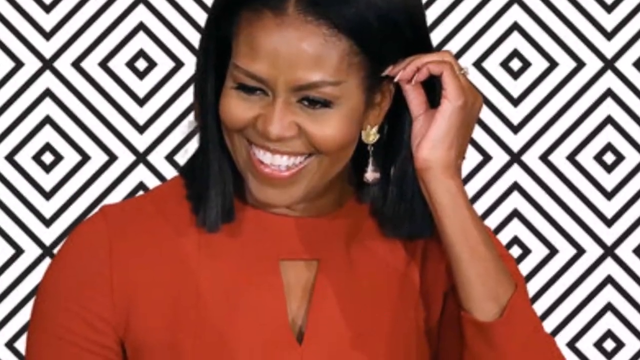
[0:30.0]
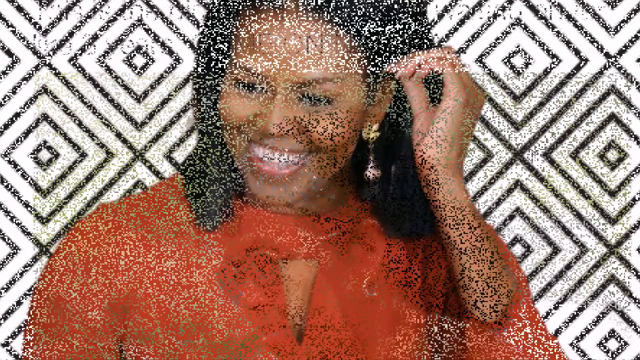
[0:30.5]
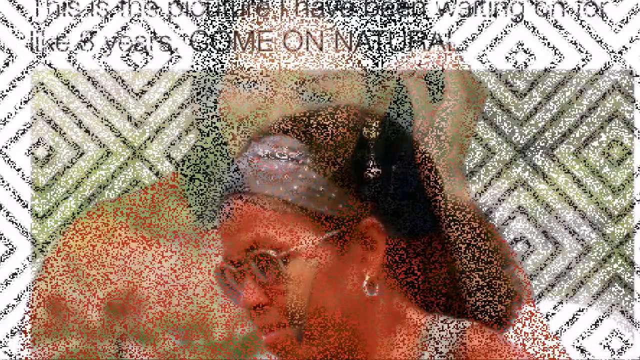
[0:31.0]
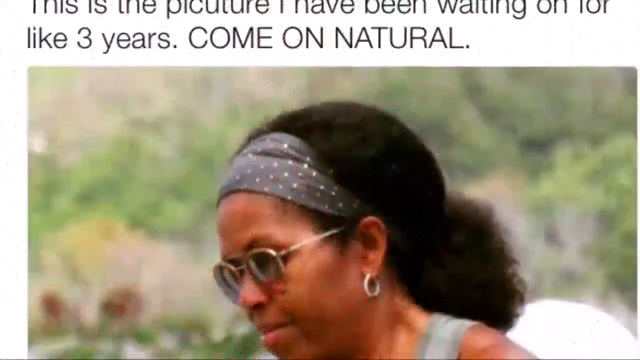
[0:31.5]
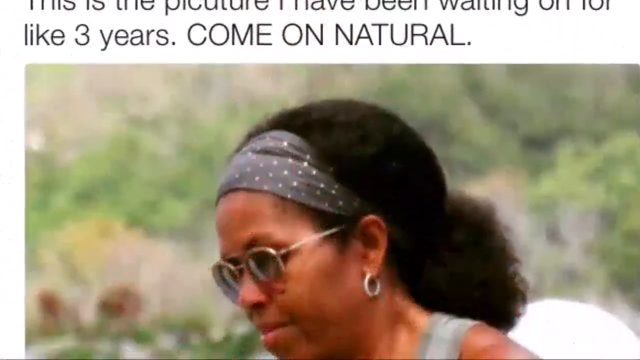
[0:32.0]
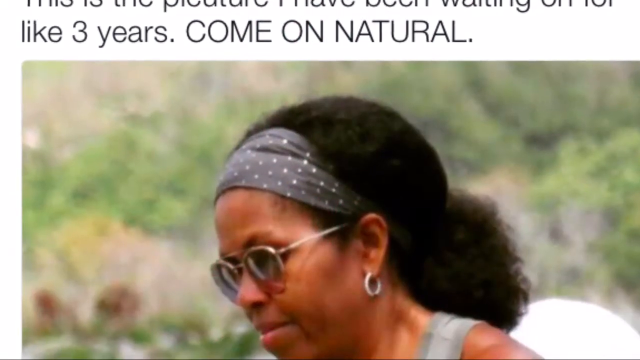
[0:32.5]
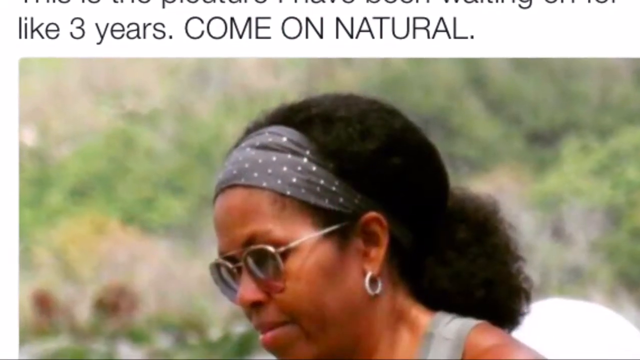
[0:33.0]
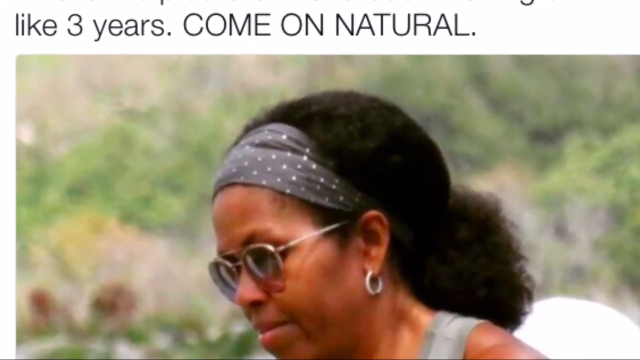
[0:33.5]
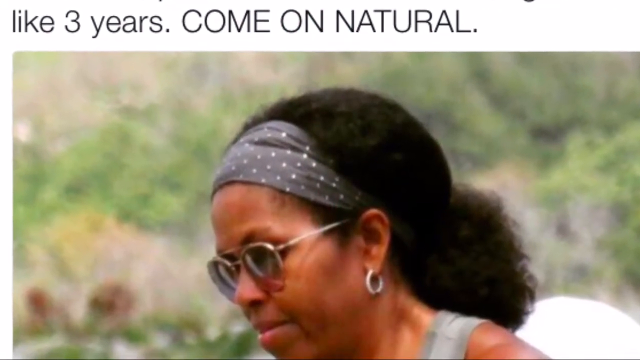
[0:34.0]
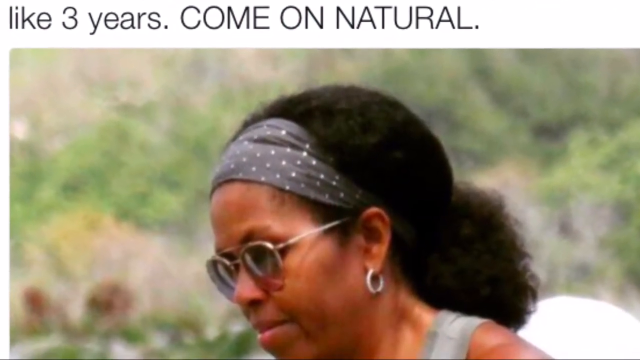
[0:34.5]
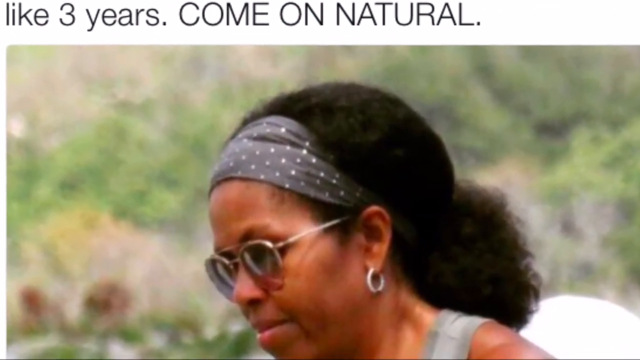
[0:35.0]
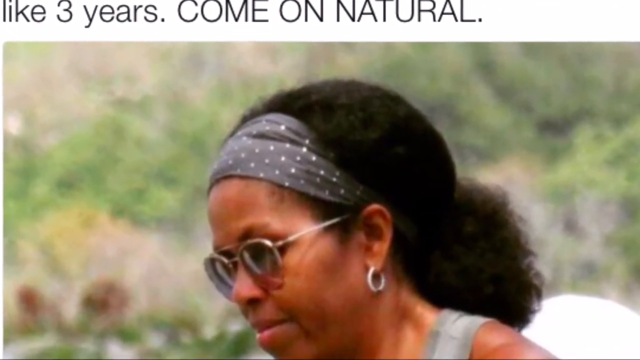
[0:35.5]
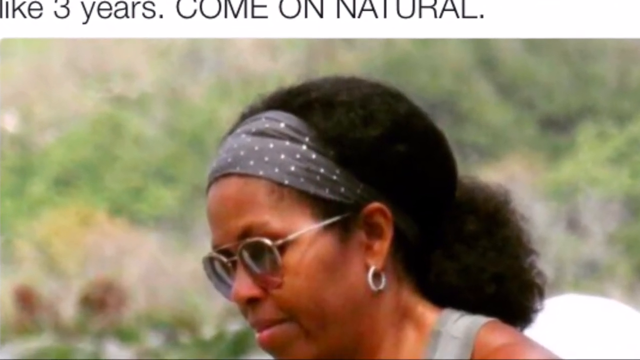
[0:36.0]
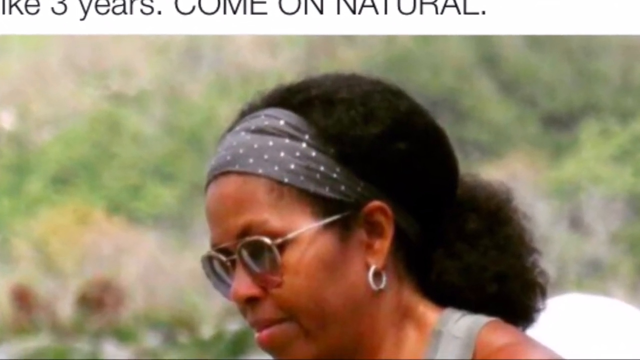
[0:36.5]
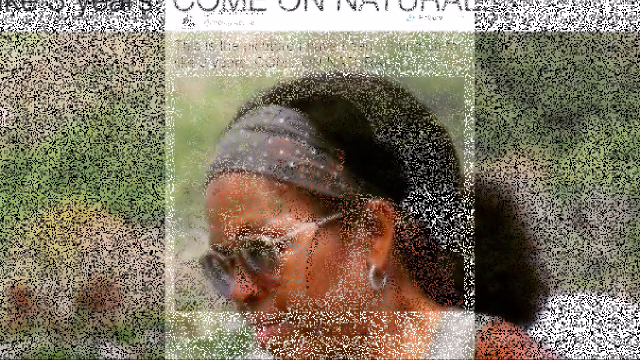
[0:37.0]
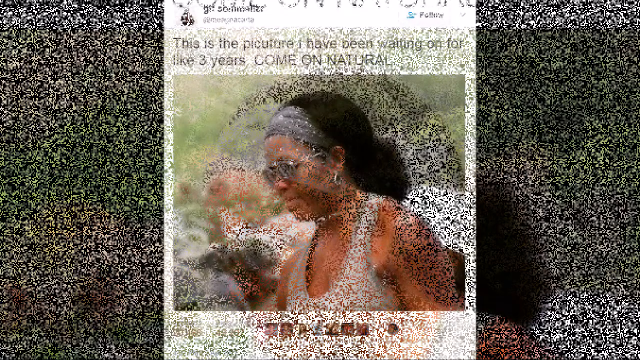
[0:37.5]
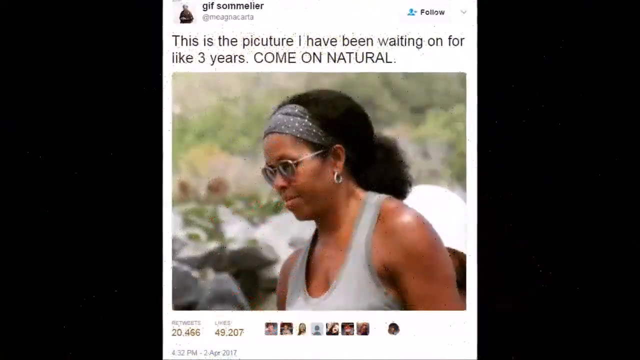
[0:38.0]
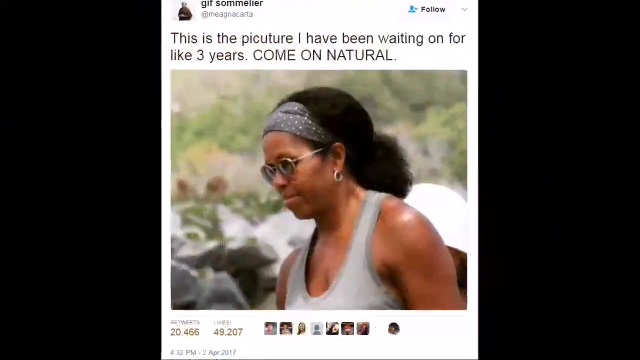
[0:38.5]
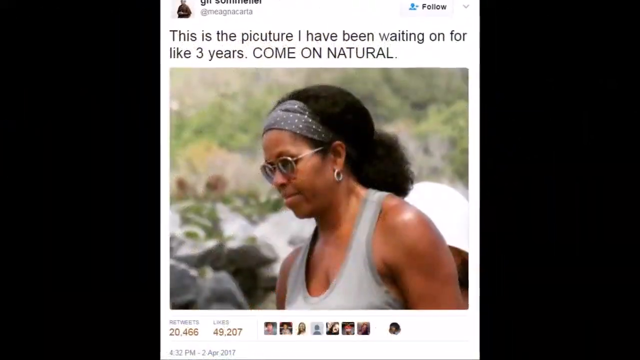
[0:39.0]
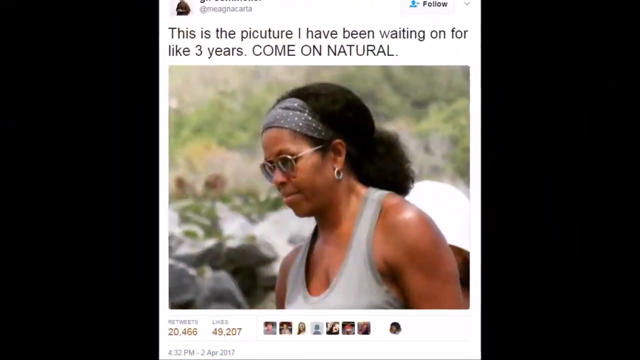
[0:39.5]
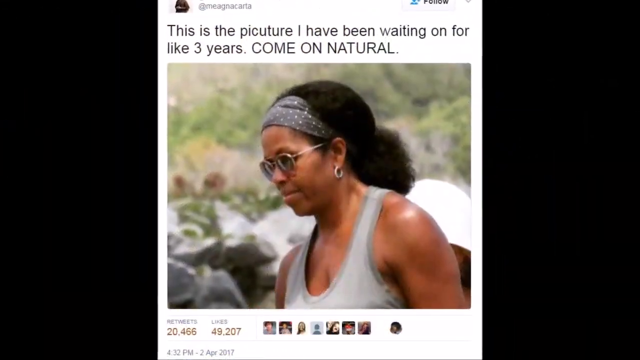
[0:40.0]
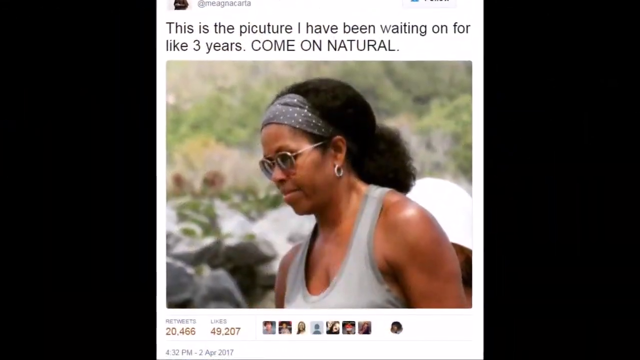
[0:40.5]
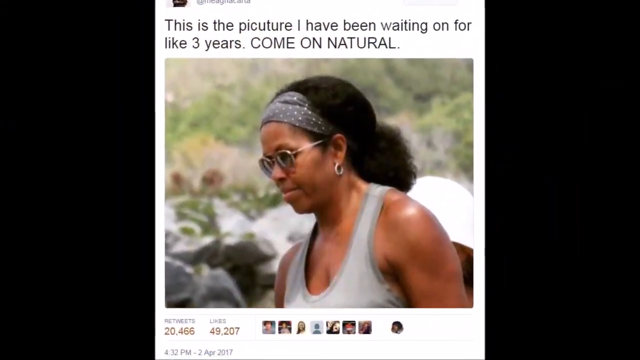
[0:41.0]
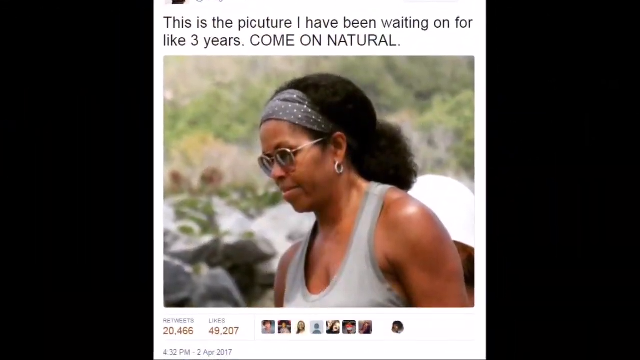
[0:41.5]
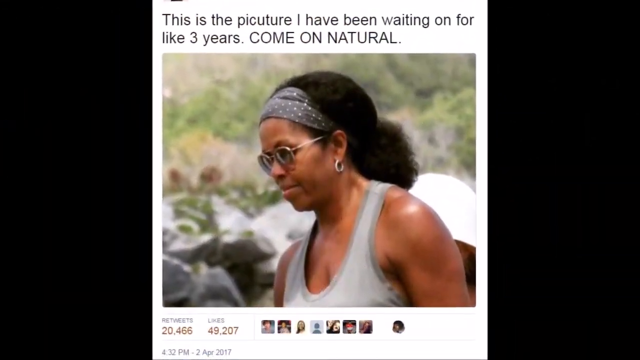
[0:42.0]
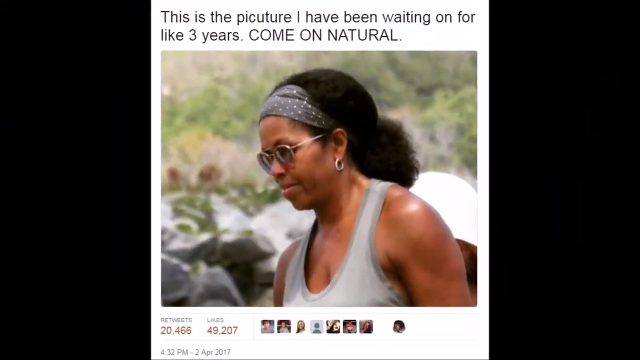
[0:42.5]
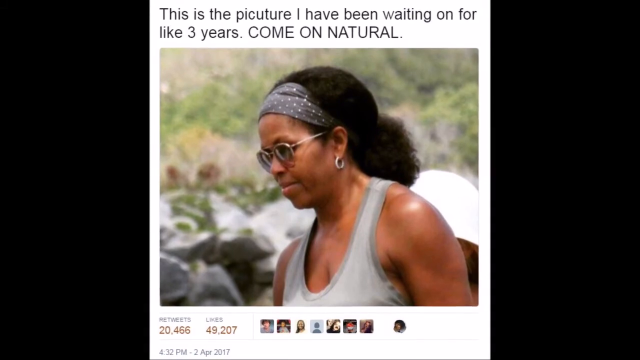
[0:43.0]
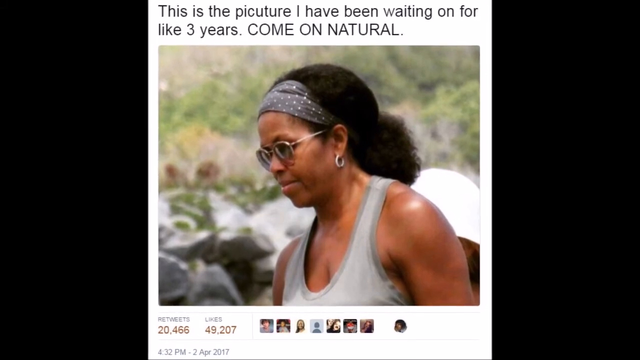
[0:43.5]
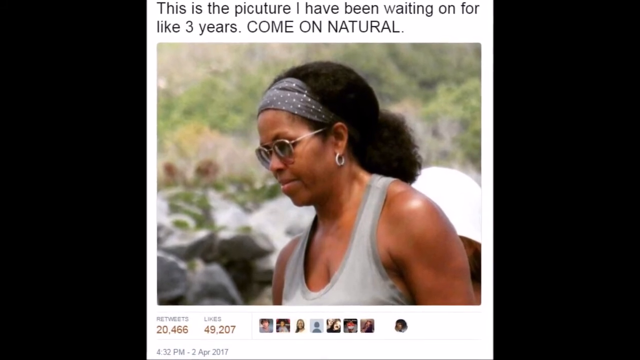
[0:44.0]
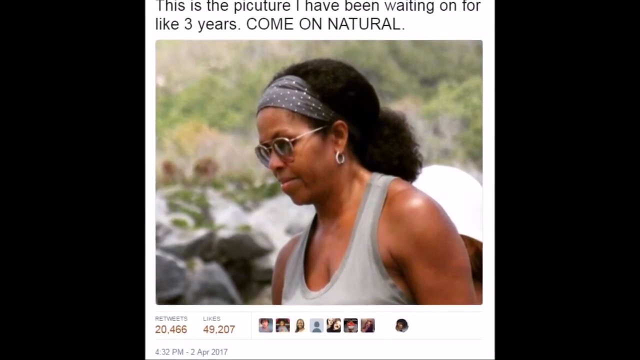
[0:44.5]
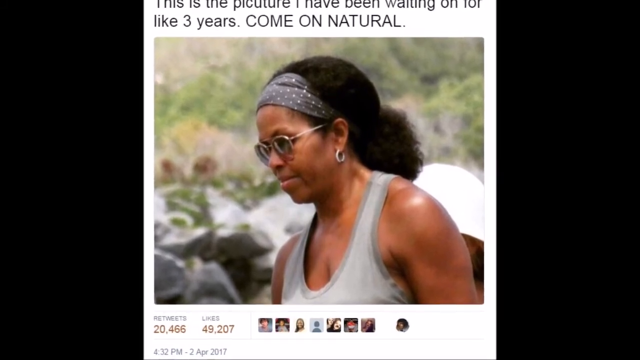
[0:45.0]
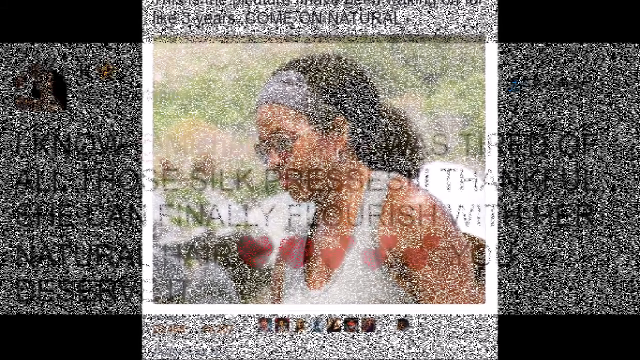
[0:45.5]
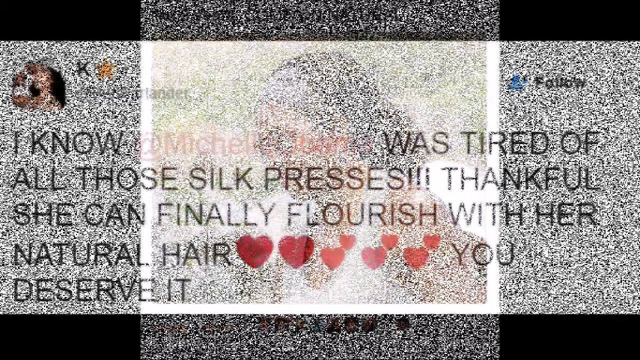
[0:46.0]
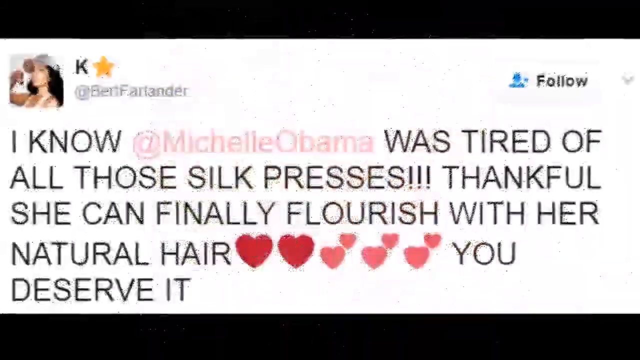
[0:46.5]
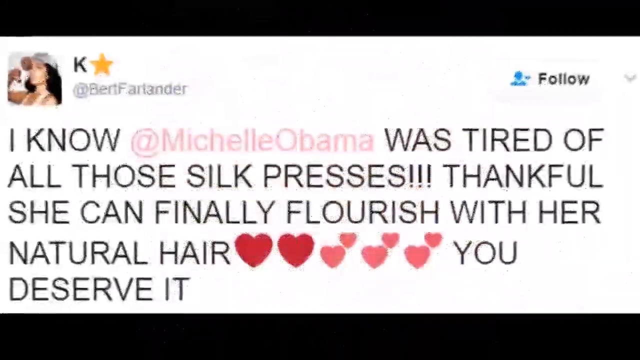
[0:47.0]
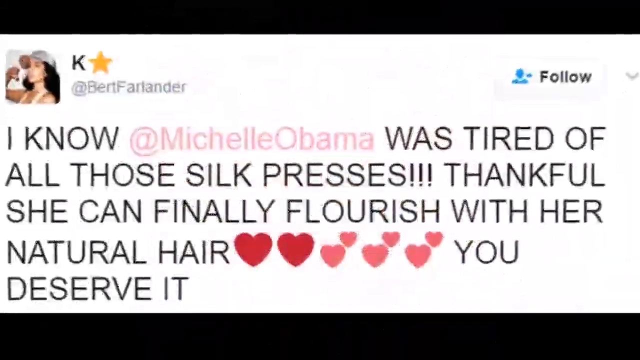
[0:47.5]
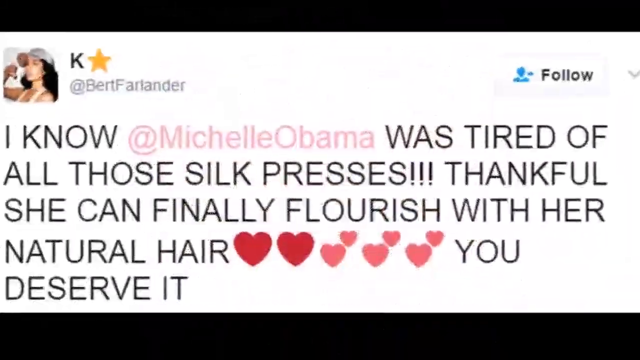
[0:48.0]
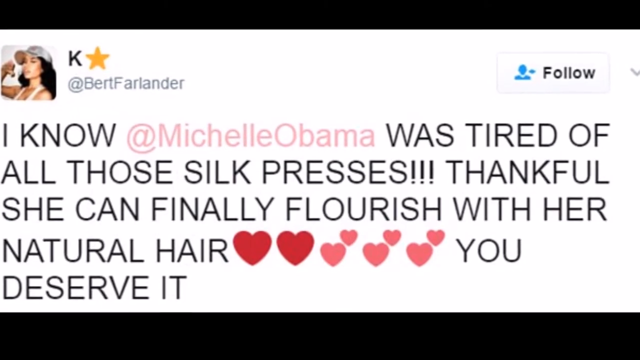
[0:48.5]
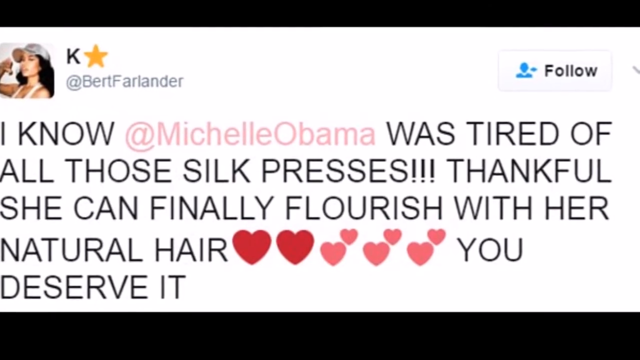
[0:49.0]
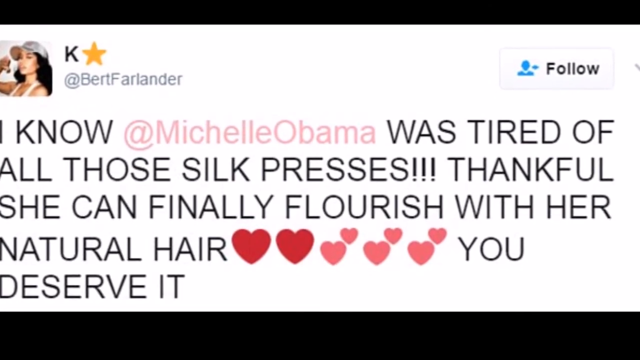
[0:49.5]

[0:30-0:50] A woman in red clothing smiles and holds her head, then disappears. Another section shows a woman with text above her head reading "this is the picture I have been waiting on for like three years. COME ON NATURAL". The photos seem to be zoomed out. It changes to another post showing a clear photo of her with the same text. Finally, a post appears reading "I KNOW @MichelleObama WAS TIRED OF ALL THOSE SILK PRESSES!!! THANKFUL SHE CAN FINALLY FLOURISH WITH HER NATURAL HAIR YOU DESERVE IT", with some love emojis in the text. At the top right is the word "follow" with a logo in the form of a man just behind it. At the top left is a picture of the person who posted it, with the name Kay and the username @BertFarlander.